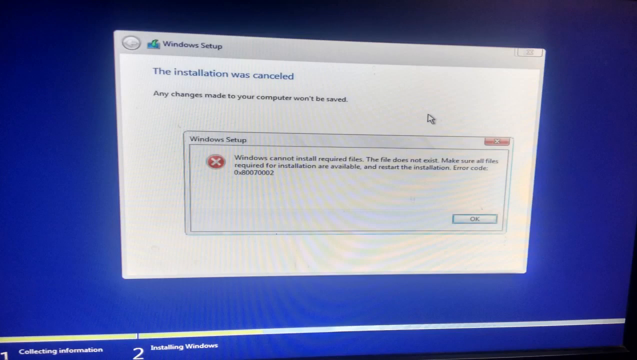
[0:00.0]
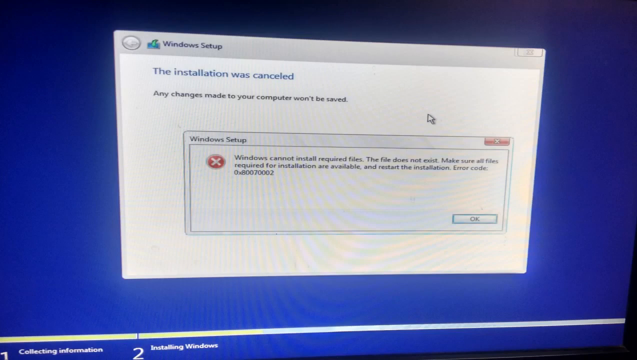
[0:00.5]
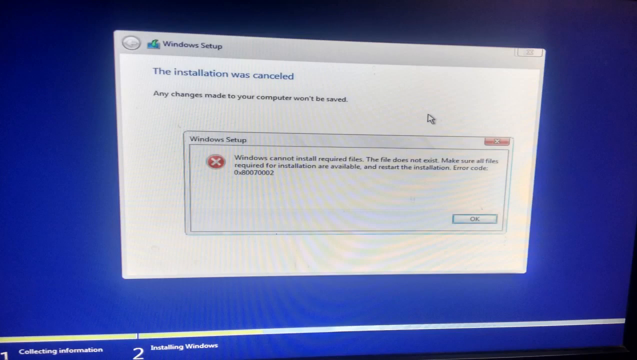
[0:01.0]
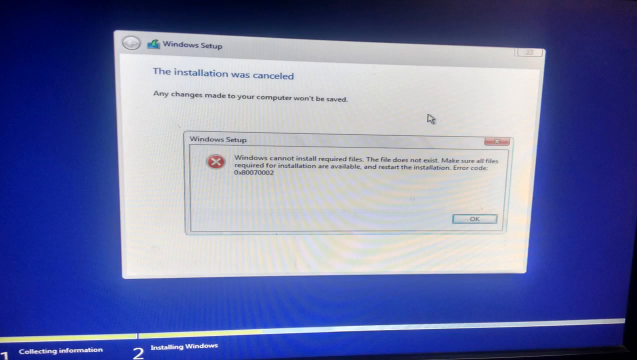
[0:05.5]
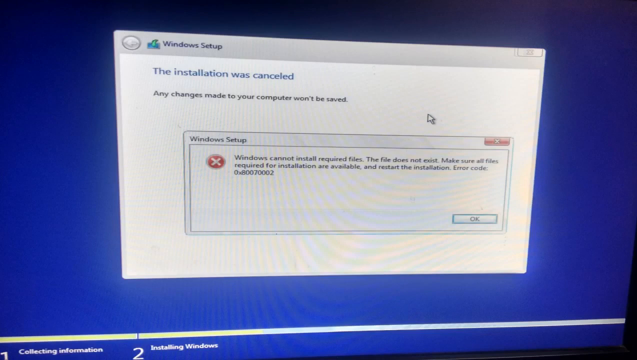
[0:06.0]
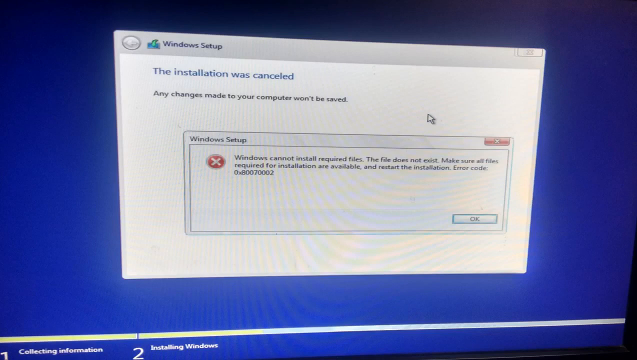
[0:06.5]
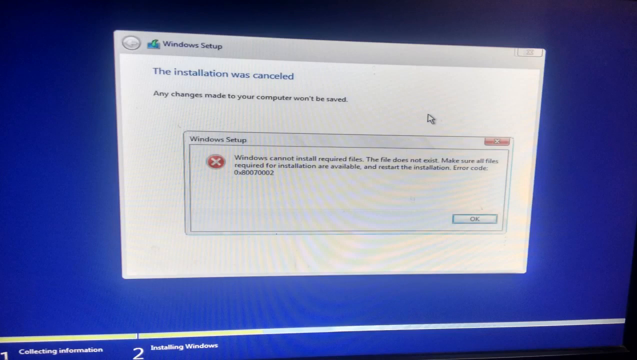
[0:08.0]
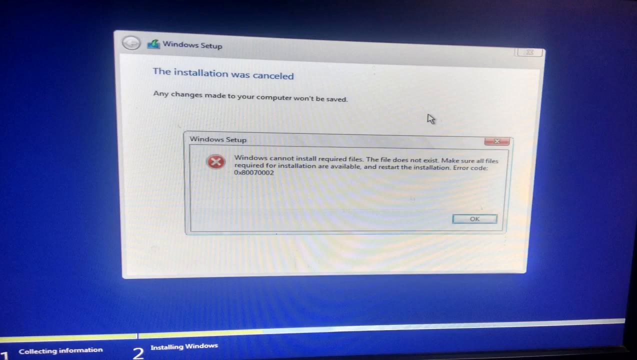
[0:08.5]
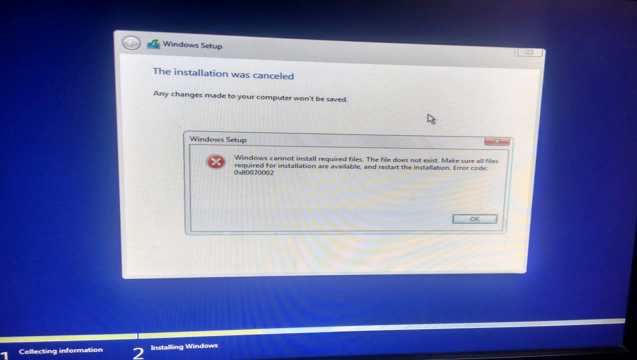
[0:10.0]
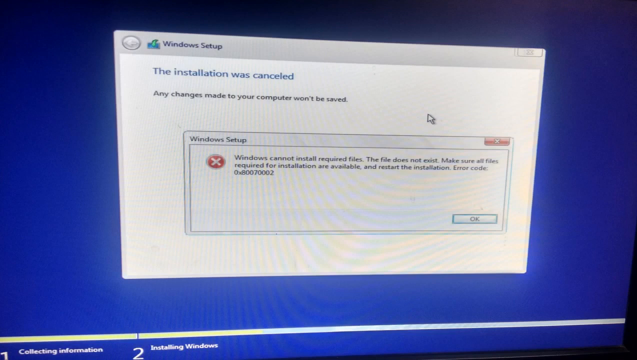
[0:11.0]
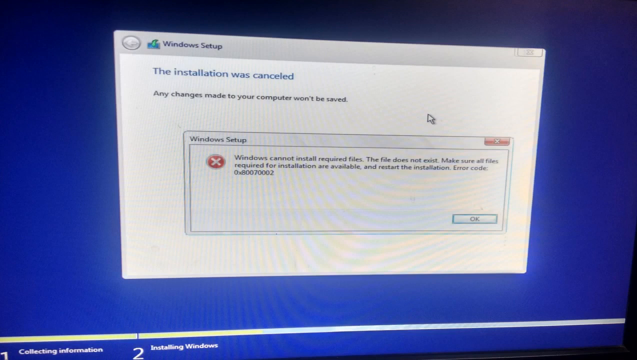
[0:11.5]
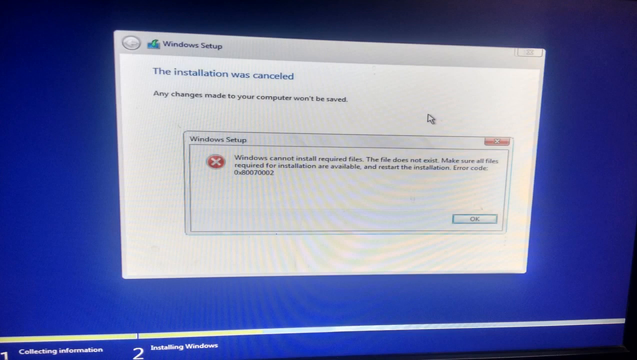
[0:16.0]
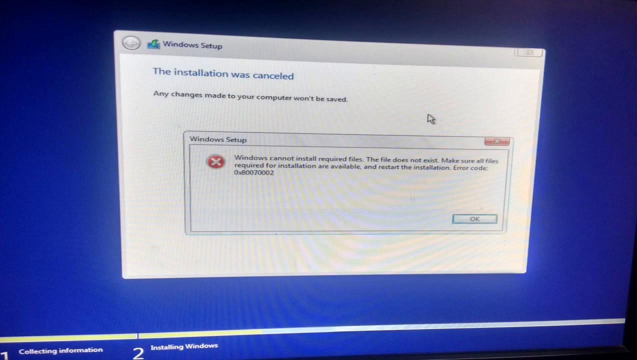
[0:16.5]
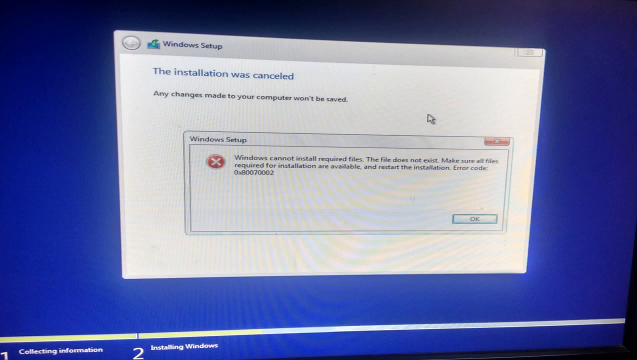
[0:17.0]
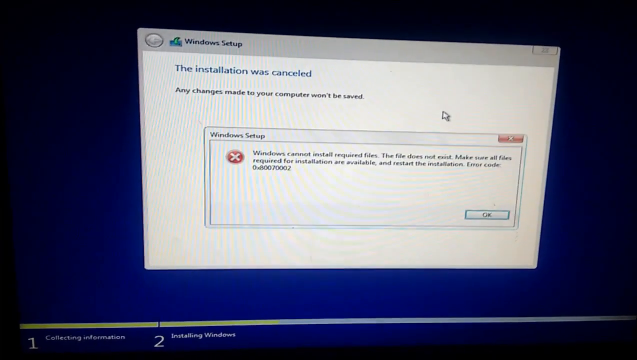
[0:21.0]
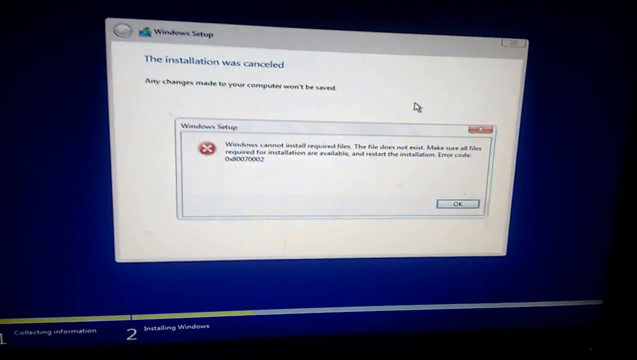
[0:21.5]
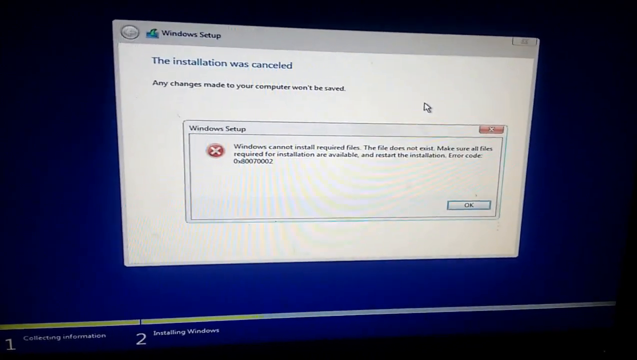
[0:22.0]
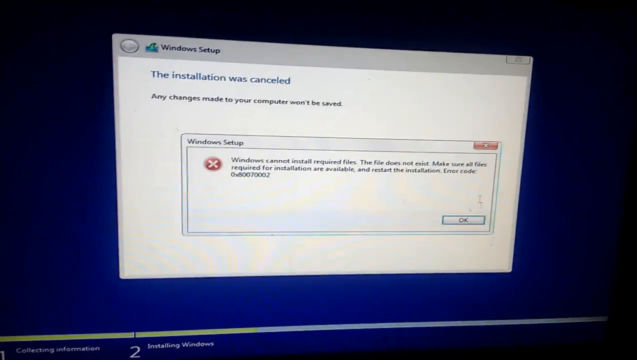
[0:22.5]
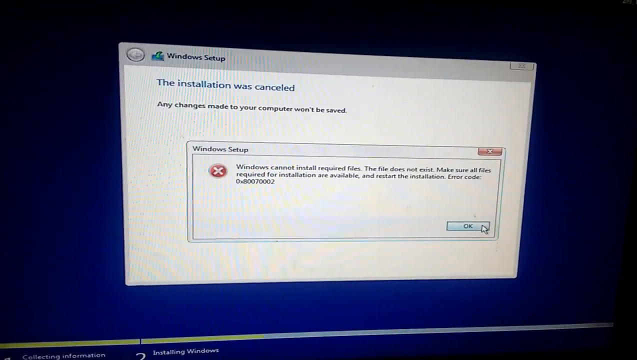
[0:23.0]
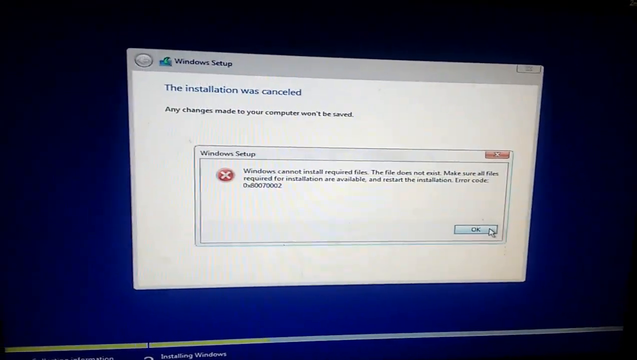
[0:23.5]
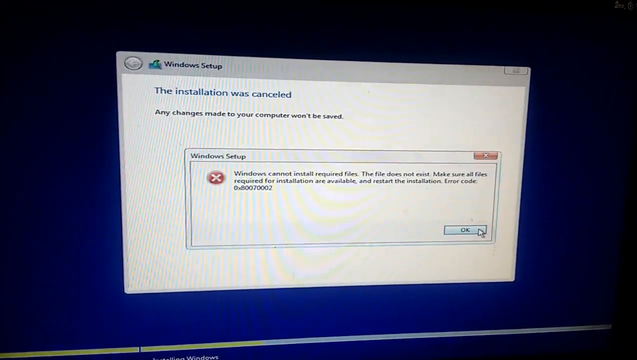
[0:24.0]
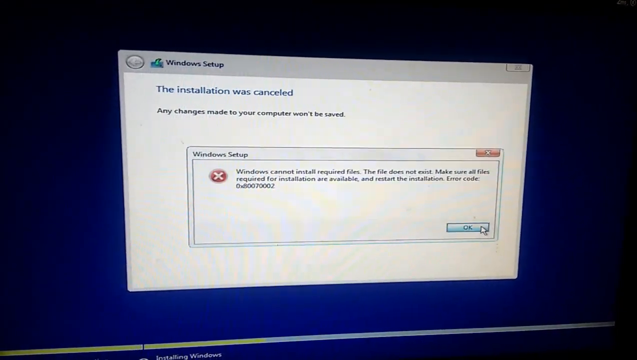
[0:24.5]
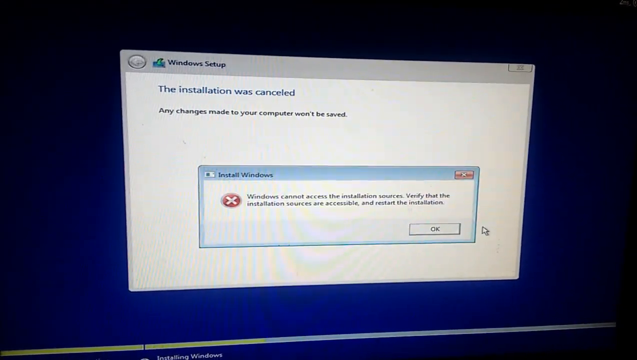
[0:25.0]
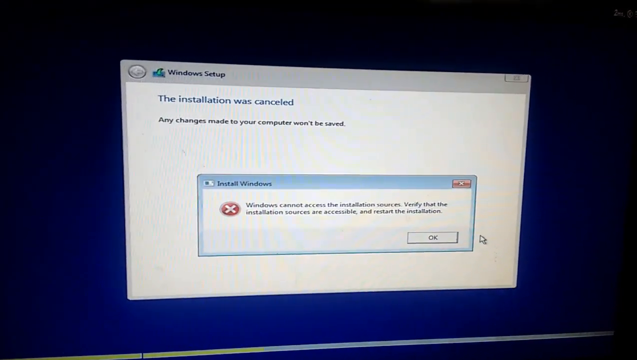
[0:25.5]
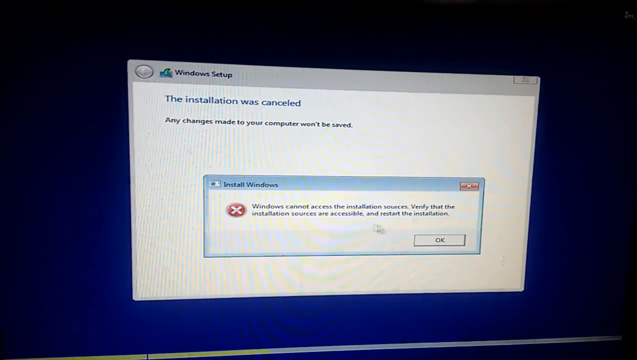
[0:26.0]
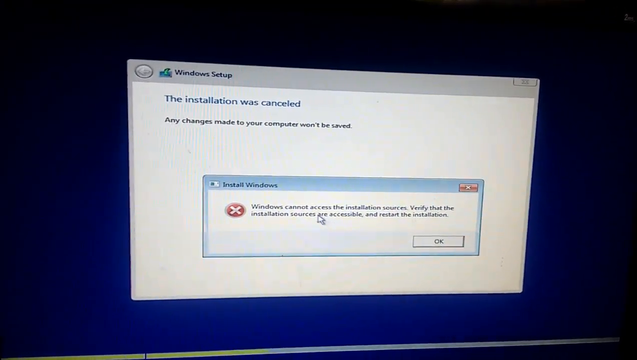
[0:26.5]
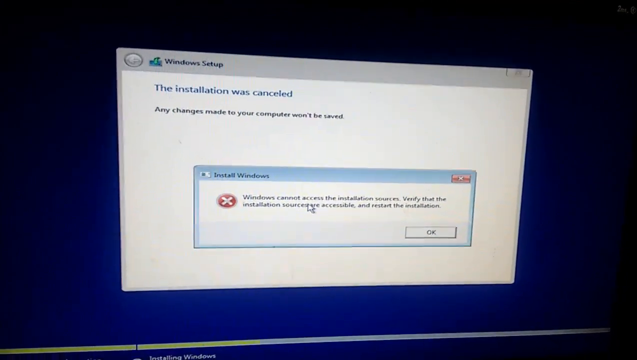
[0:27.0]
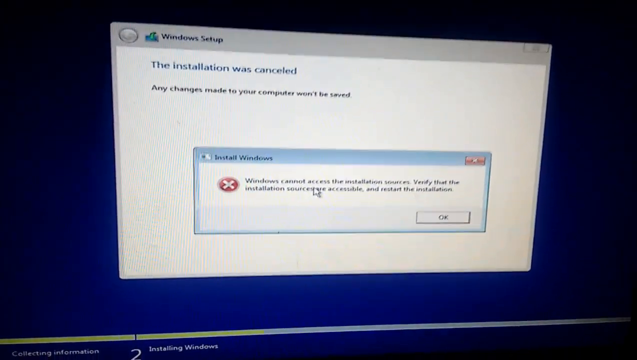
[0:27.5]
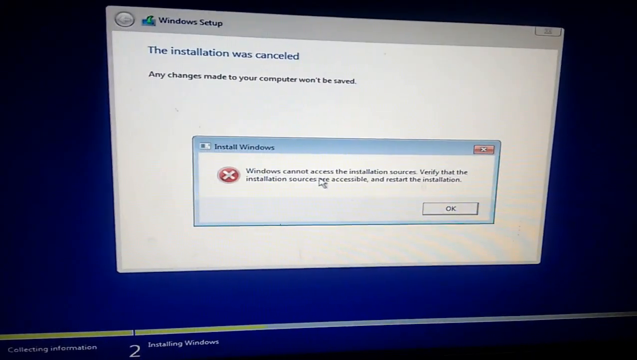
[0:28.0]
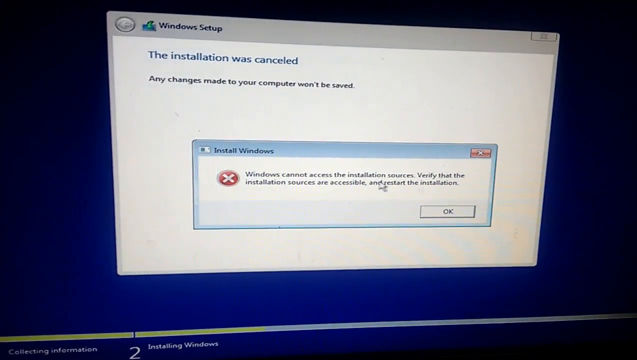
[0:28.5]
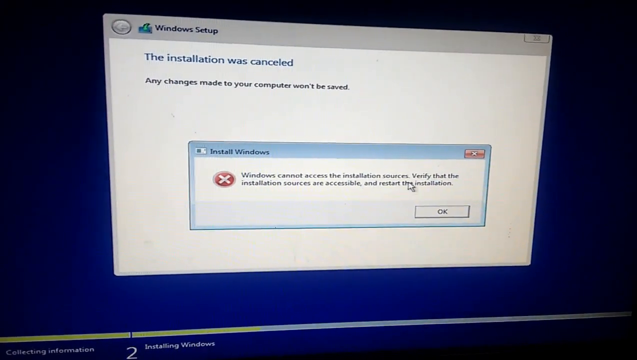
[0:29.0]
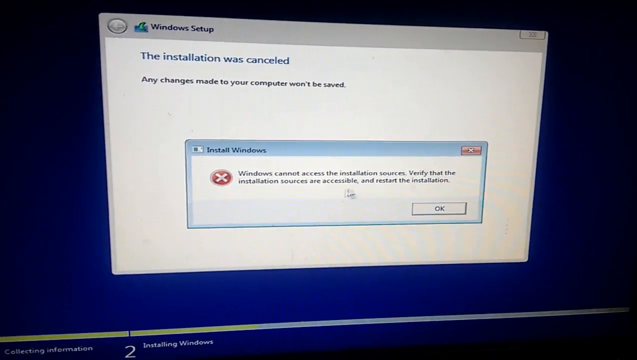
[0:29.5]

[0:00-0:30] What appears to be a presentation or slideshow of some kind opens on a Windows Setup window, looking like possibly Windows 10. The header of the window reads "the installation was canceled," and under that it says "any changes made to your computer won't be saved." A pop-up within that window says "Windows cannot install required files. The file does not exist. Make sure all files required for installation are available and restart the installation," followed by an error code, an OK button and an X in the top right corner. The screen stays on these two windows layered on top of each other against a dark blue background. After a while the screen starts to shake a little and the mouse moves a bit, but nothing else happens and it remains on that one screen.